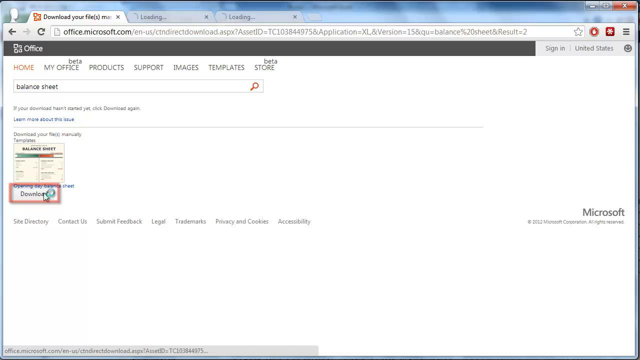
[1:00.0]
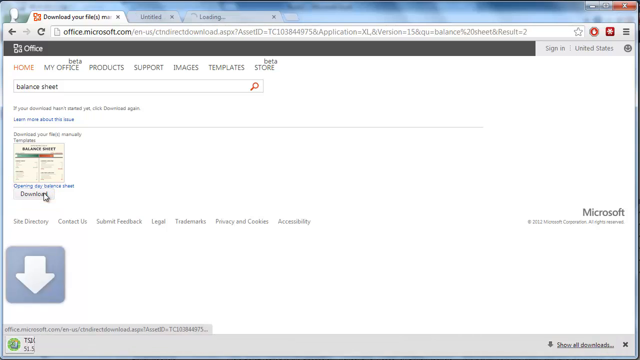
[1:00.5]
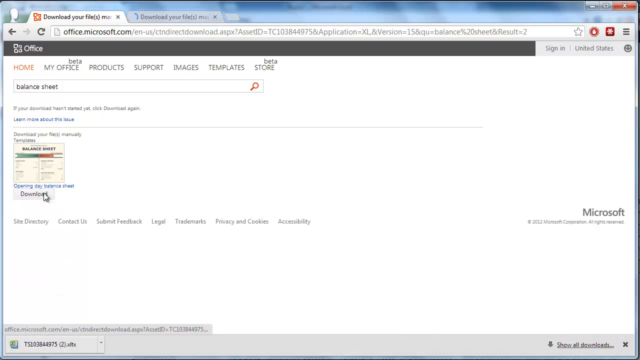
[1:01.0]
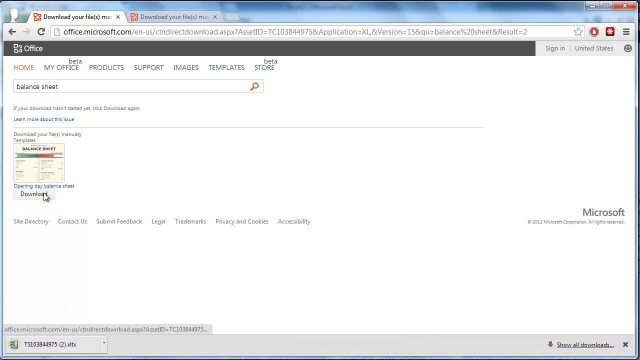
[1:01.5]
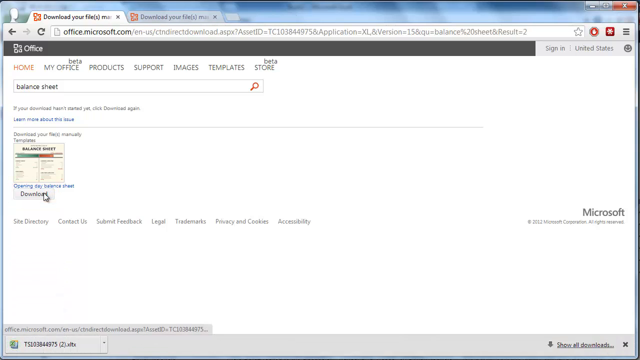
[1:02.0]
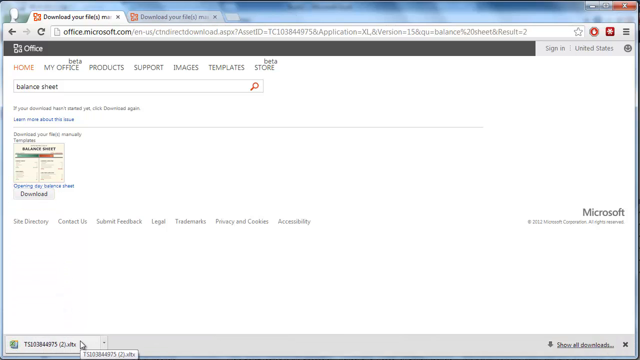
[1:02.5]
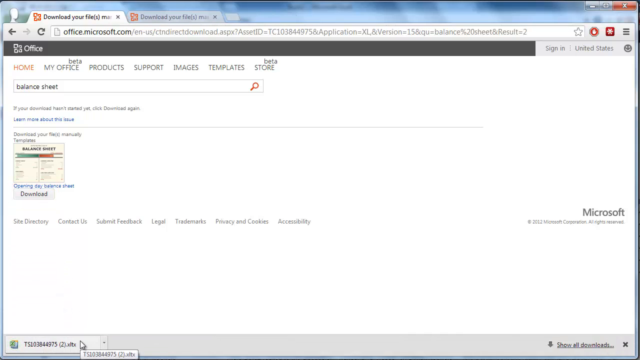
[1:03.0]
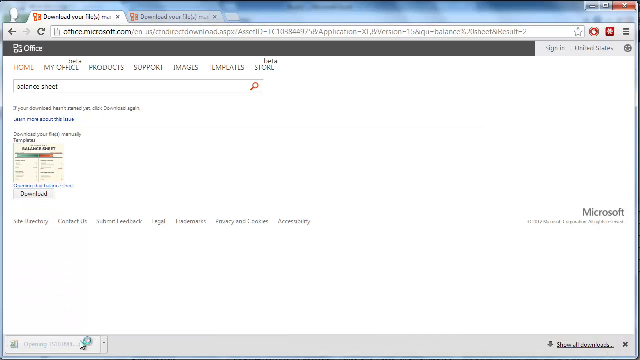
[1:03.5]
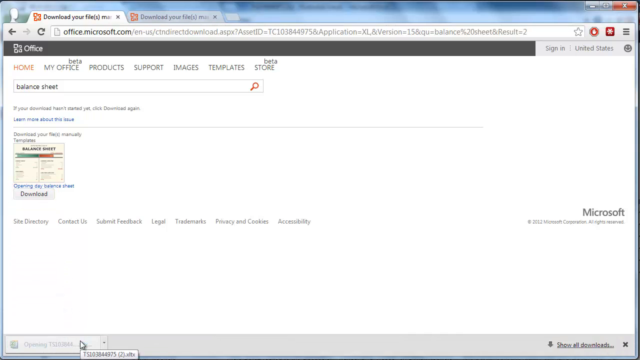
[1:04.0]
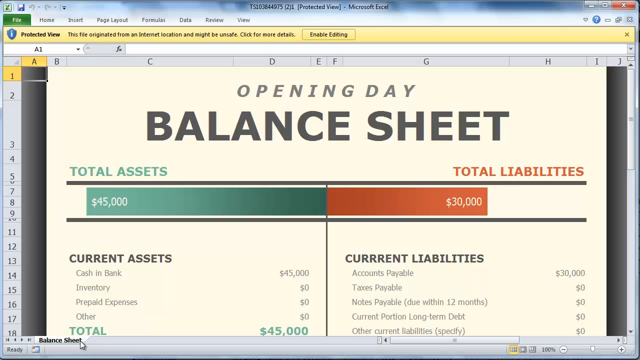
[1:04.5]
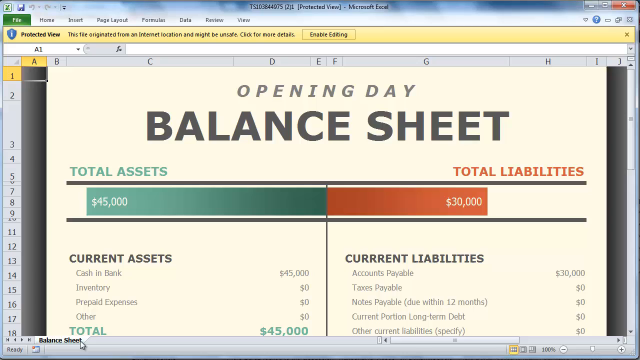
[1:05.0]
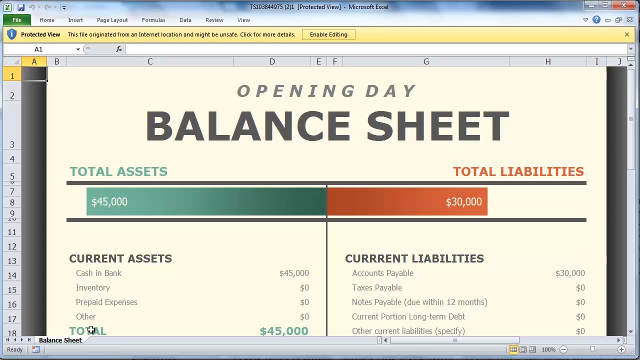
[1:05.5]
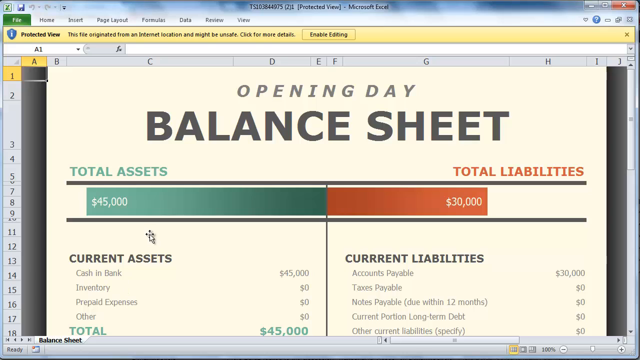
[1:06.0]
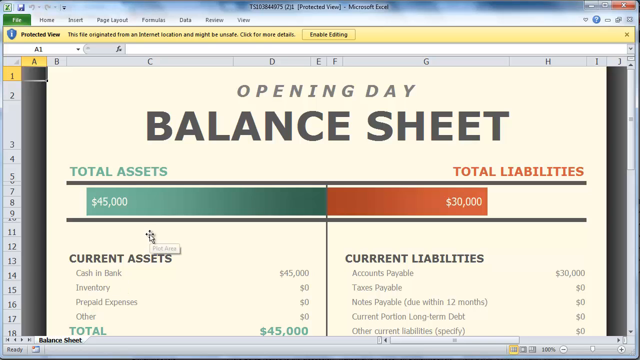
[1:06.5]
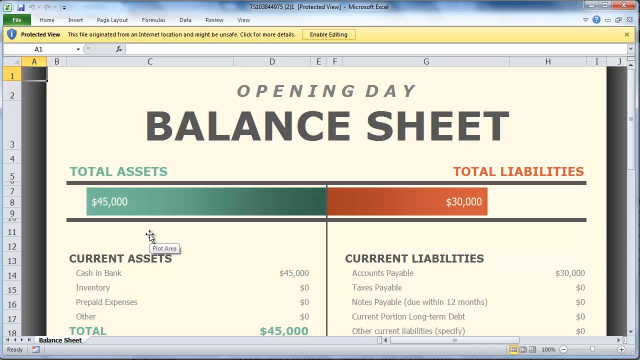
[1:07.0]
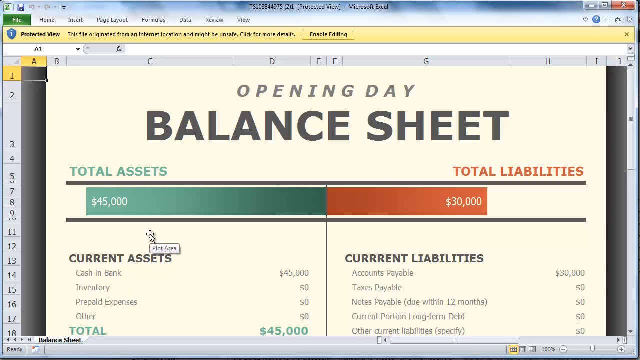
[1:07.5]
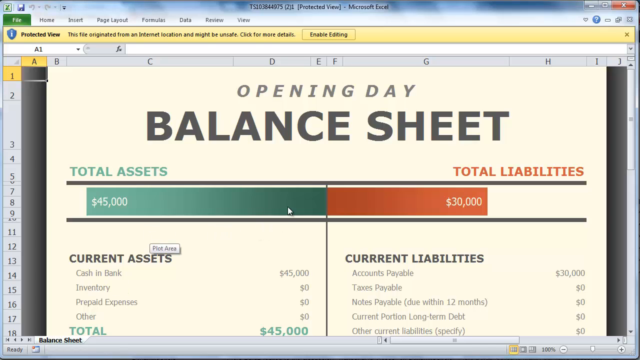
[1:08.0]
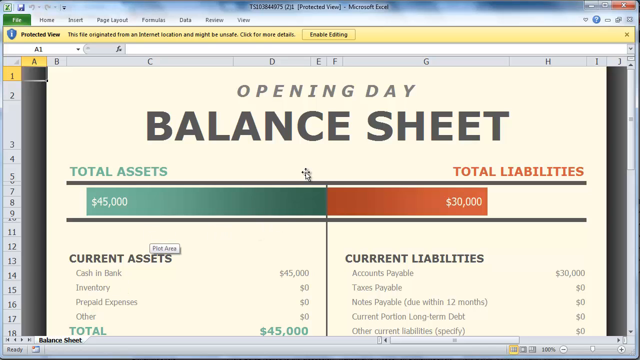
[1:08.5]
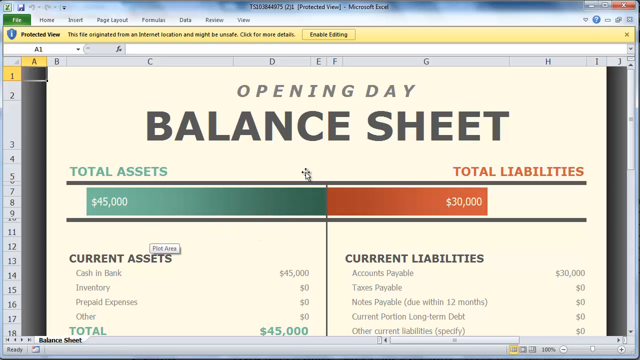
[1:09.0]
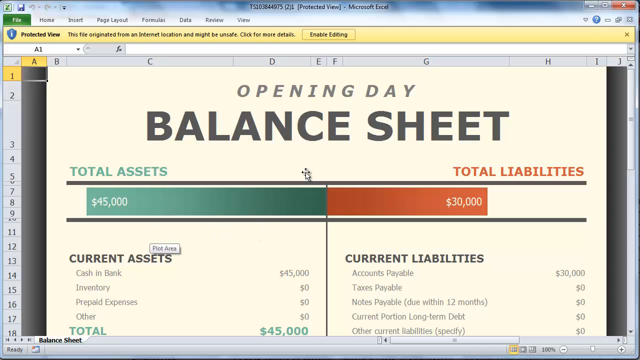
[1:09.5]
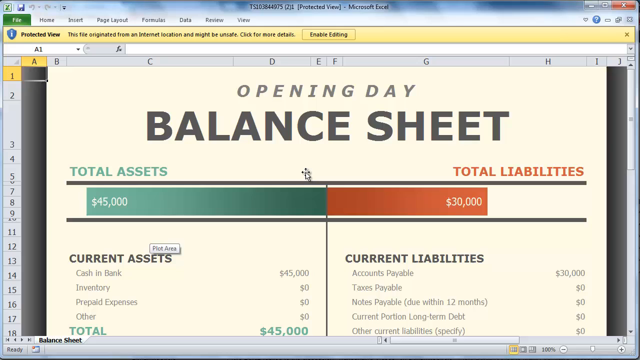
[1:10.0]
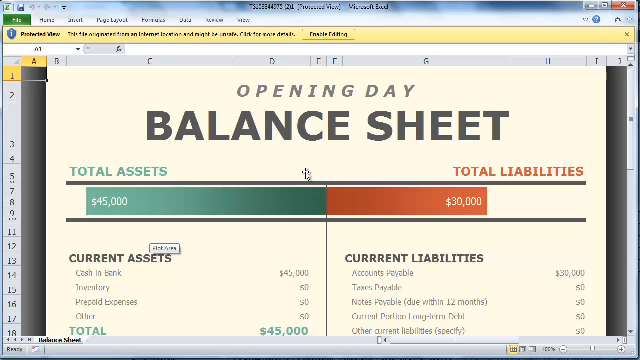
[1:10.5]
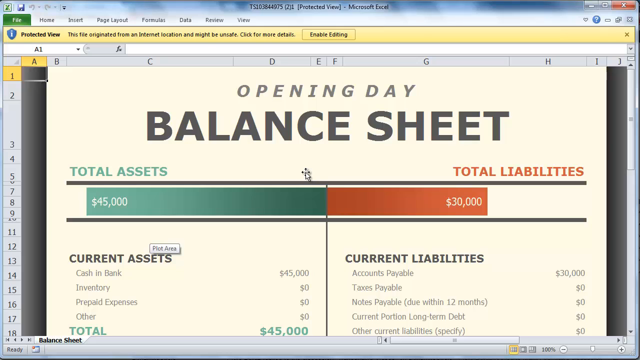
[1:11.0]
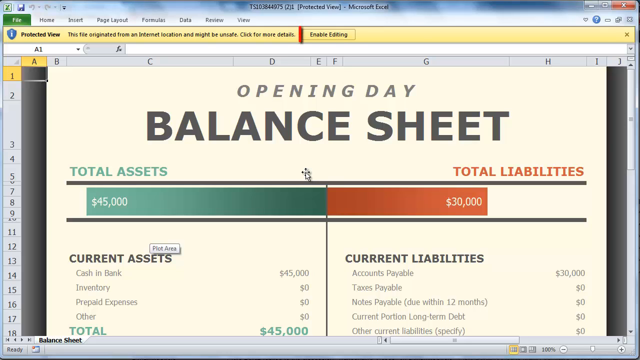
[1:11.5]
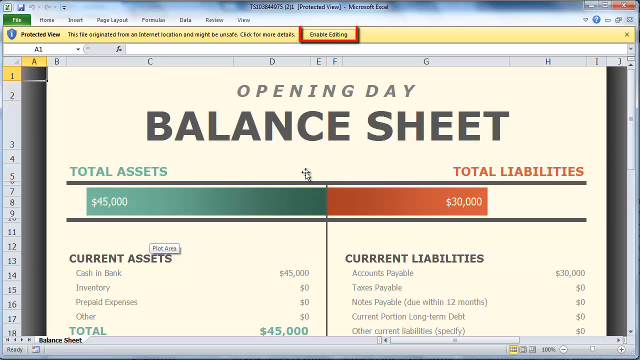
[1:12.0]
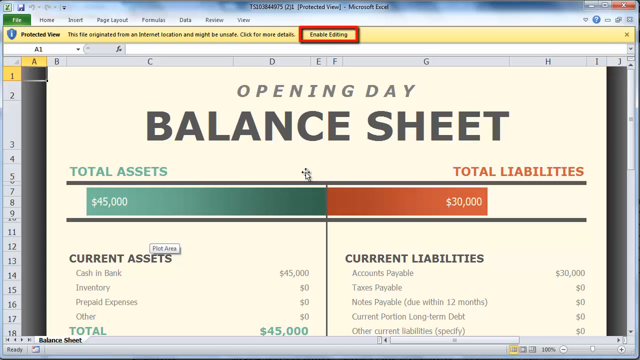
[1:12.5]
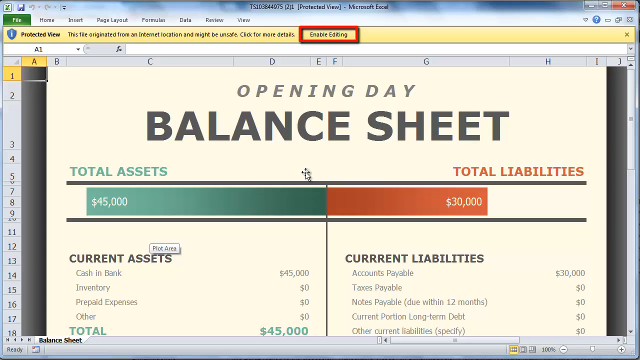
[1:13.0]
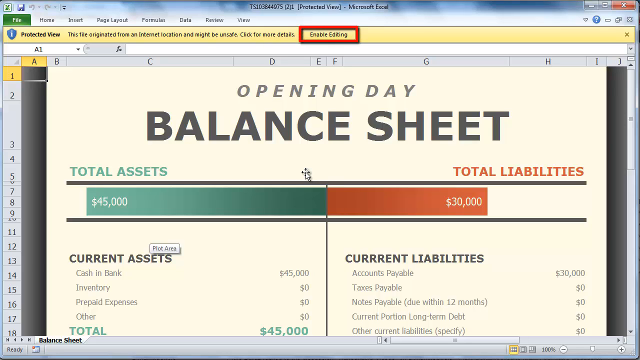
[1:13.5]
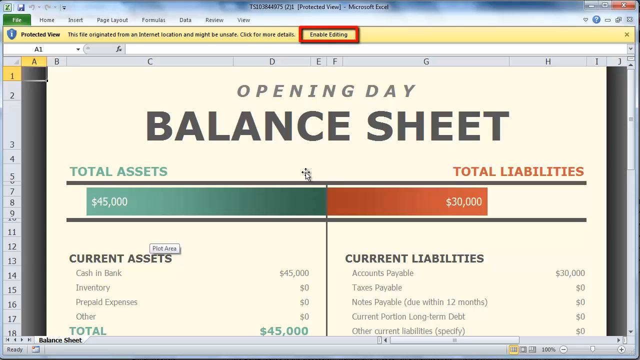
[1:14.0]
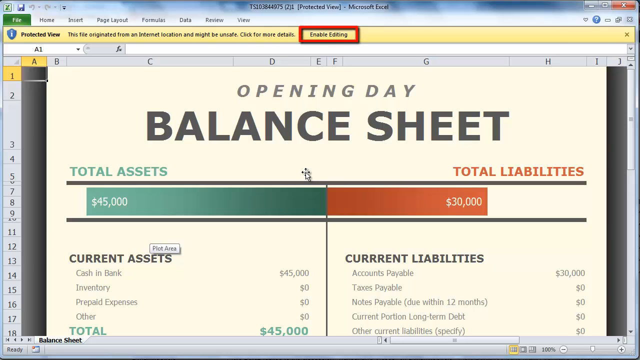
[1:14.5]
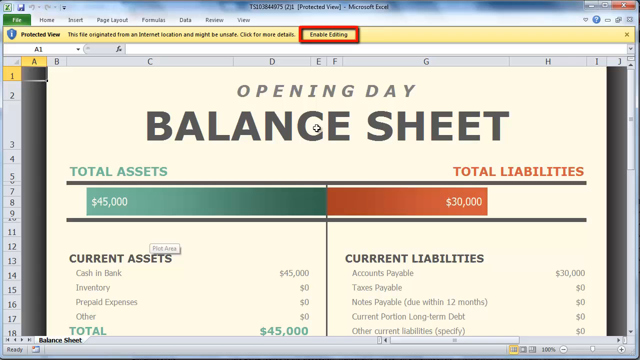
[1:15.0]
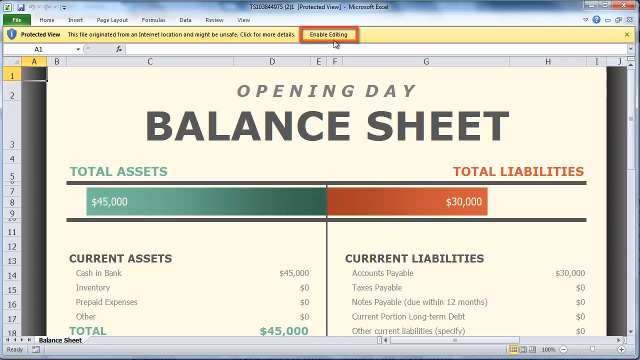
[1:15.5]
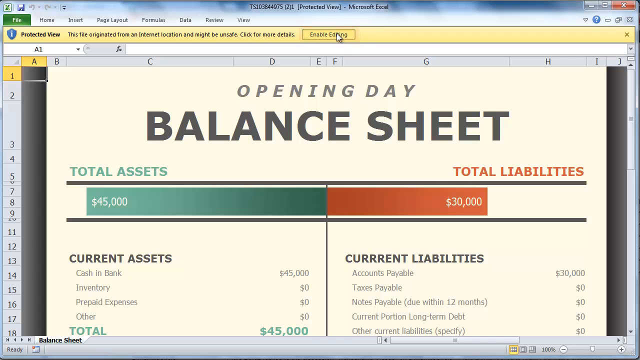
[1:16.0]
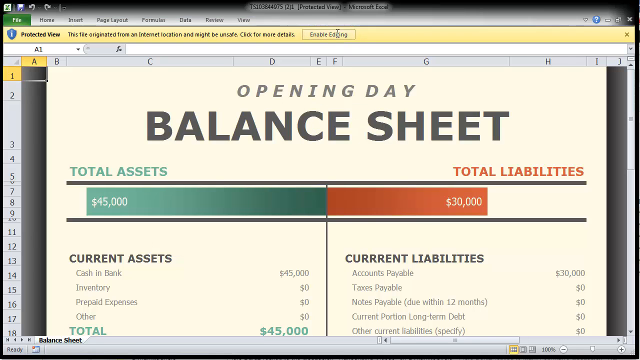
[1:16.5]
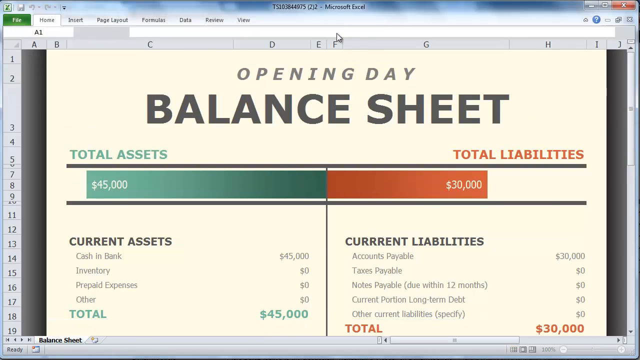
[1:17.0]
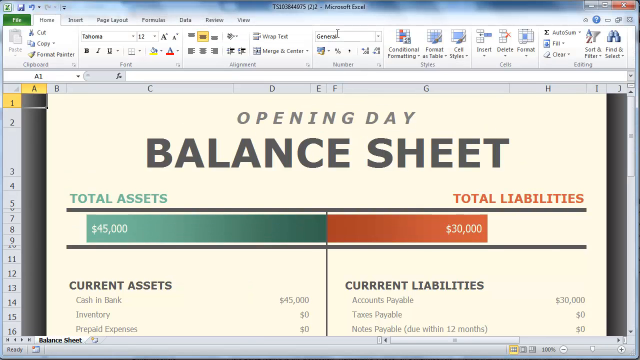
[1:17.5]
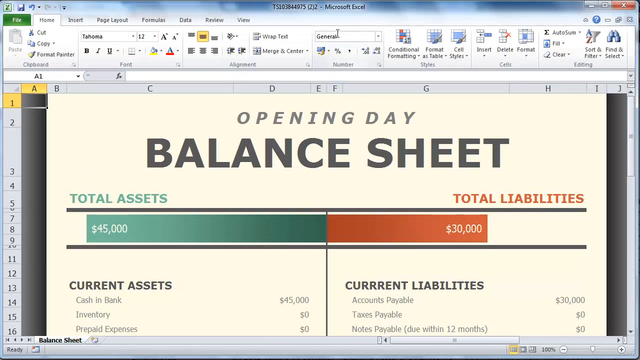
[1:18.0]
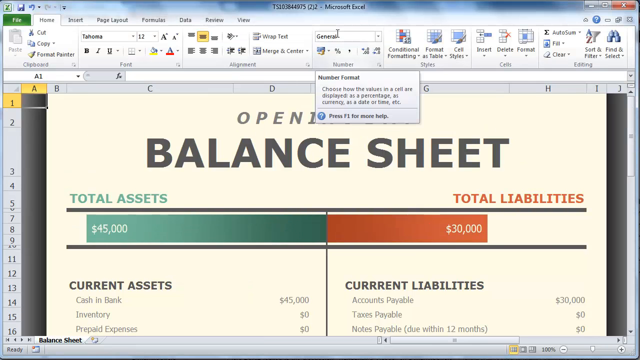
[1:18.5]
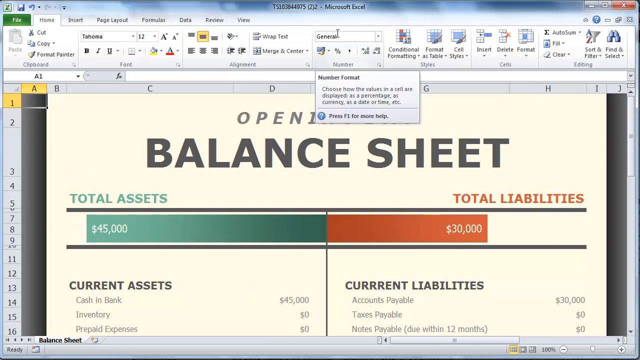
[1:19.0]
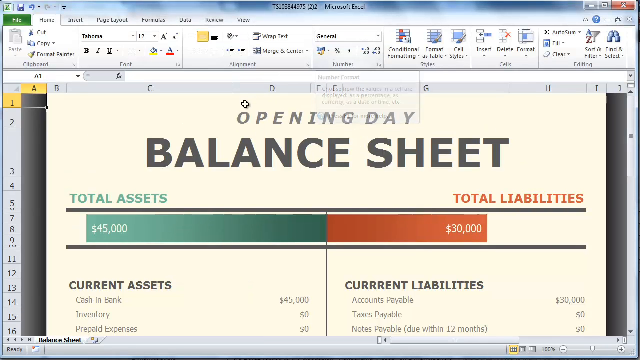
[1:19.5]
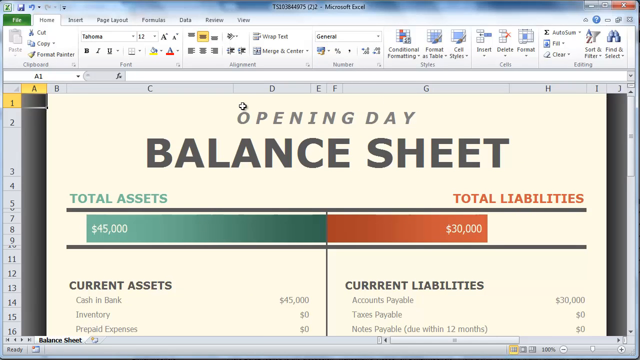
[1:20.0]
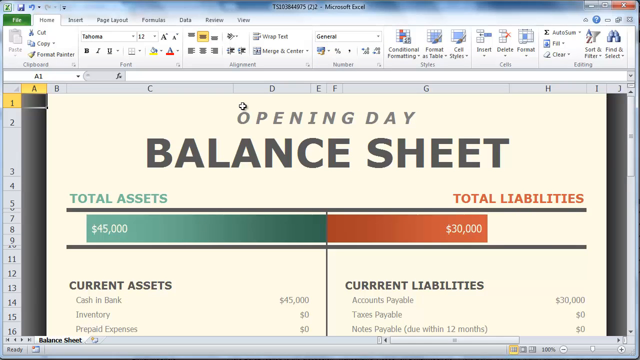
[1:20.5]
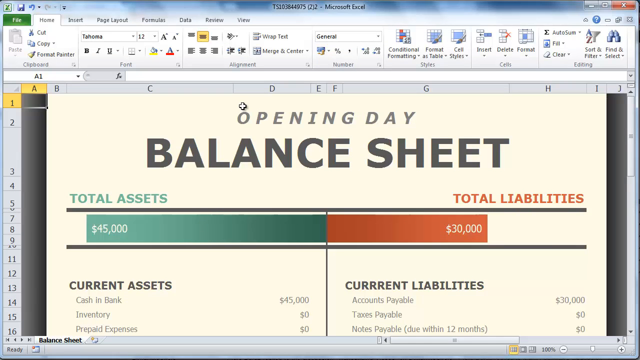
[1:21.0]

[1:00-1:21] The opening day balance sheet downloaded from the official Microsoft Office website opens in Microsoft Excel as a new file. A protected view notice appears: "This file originated from an internet location and might be unsafe. Click for more details." The person chooses the option "enable editing" so the sheet can be changed. The tutorial is made on an old version of Microsoft Windows using Internet Explorer, and the year 2012 is visible.